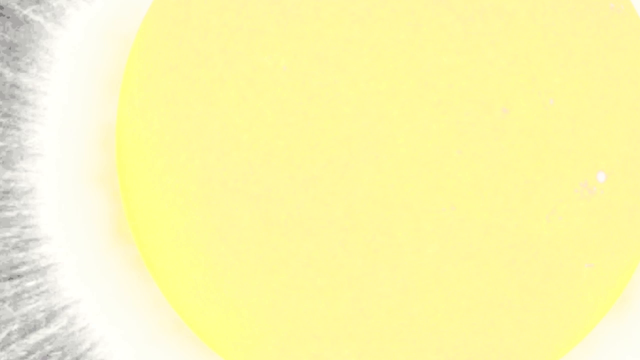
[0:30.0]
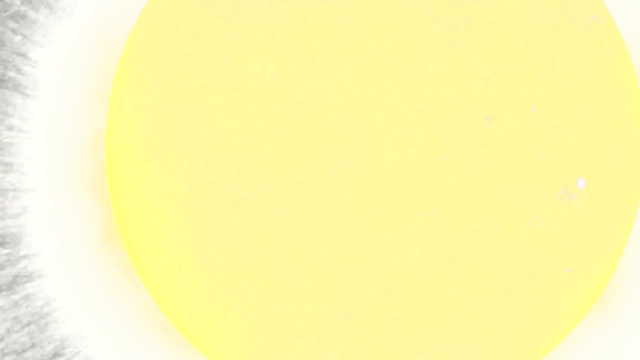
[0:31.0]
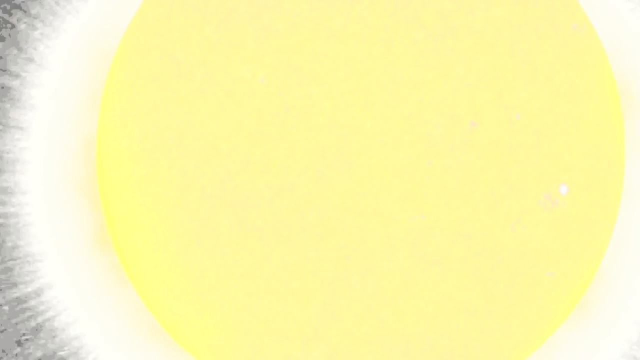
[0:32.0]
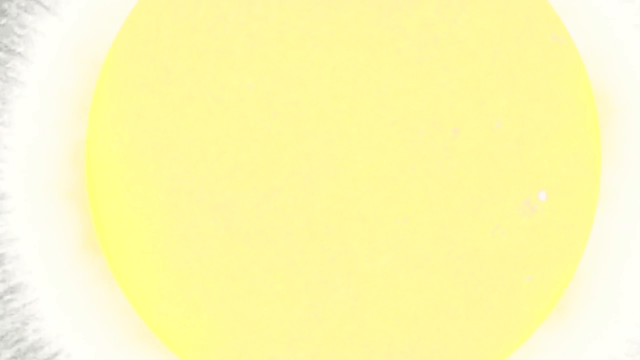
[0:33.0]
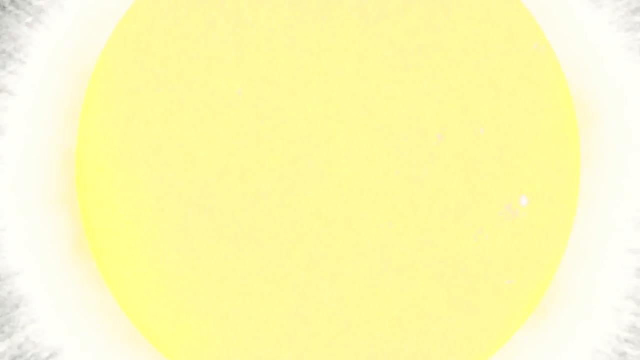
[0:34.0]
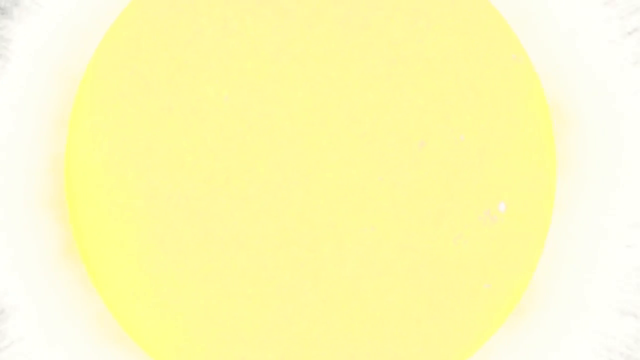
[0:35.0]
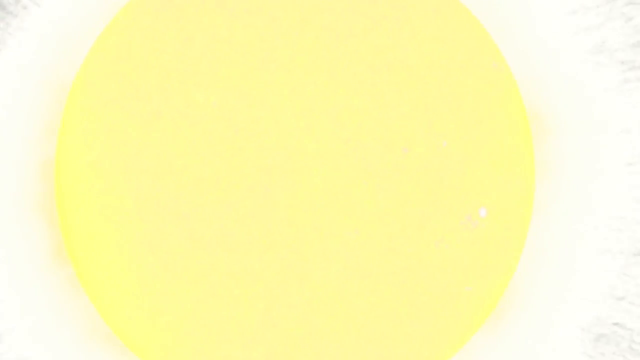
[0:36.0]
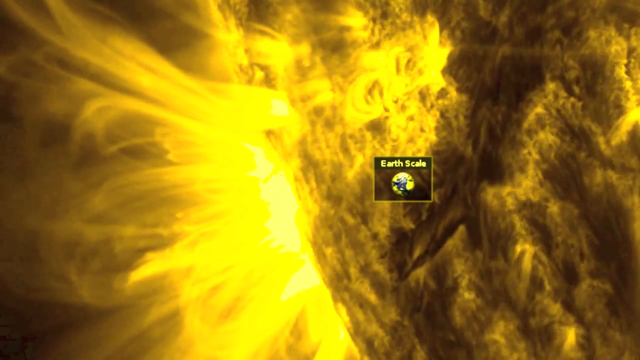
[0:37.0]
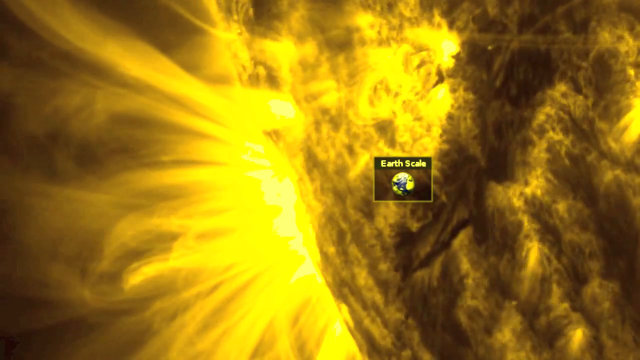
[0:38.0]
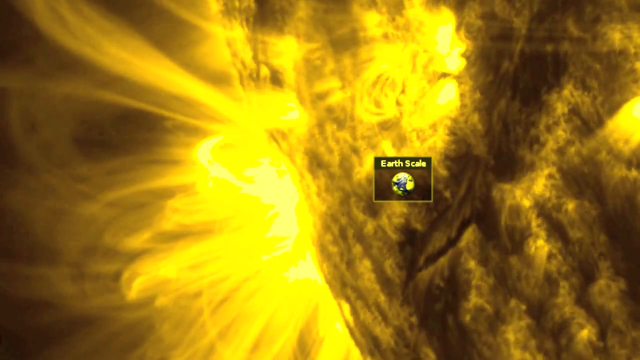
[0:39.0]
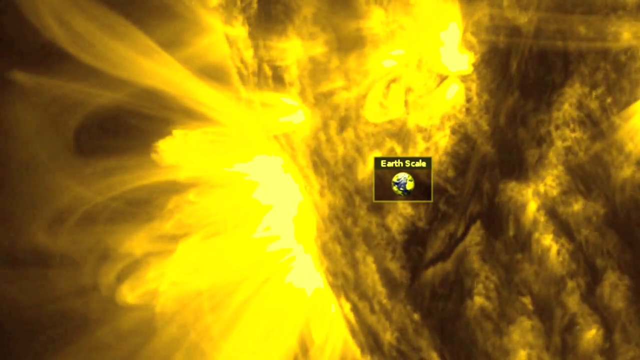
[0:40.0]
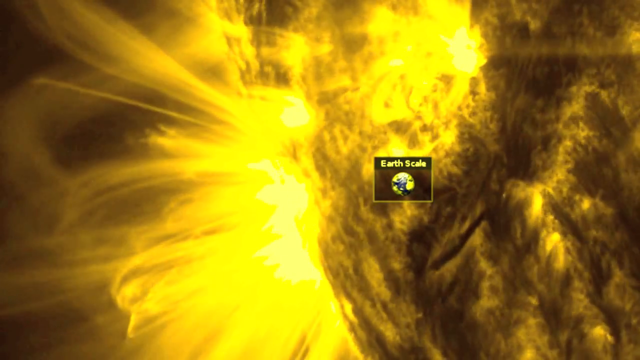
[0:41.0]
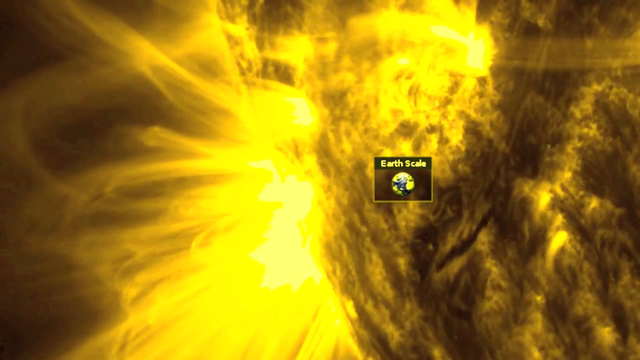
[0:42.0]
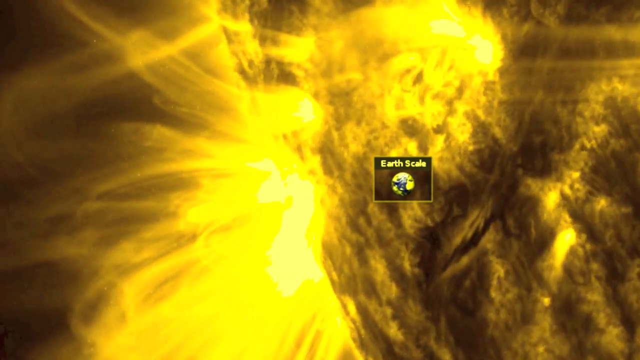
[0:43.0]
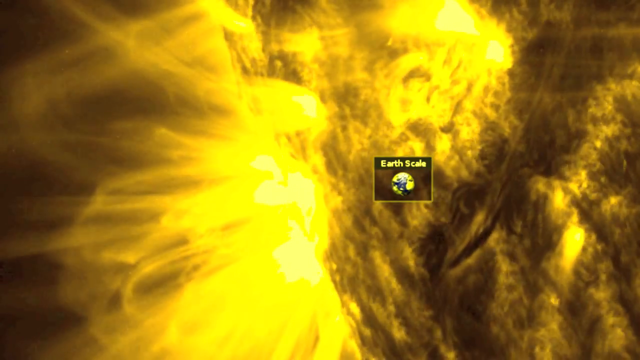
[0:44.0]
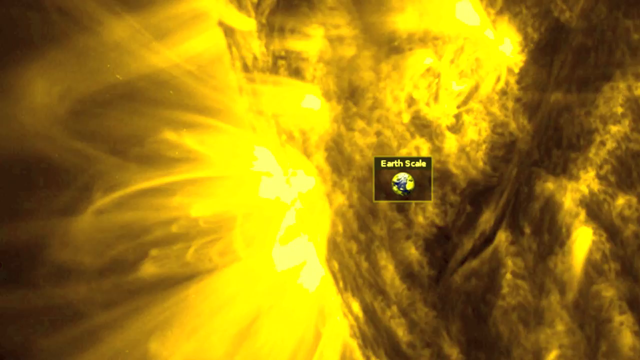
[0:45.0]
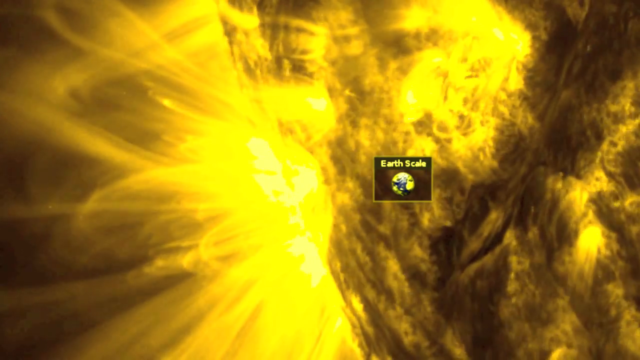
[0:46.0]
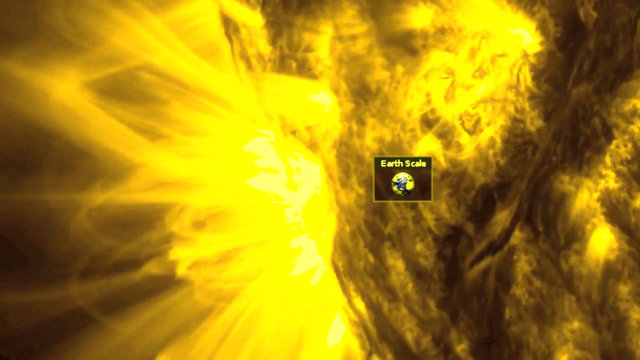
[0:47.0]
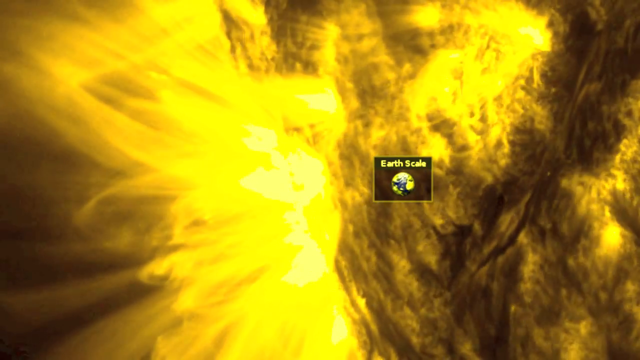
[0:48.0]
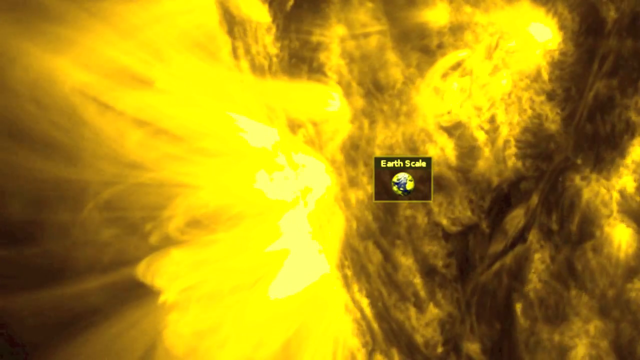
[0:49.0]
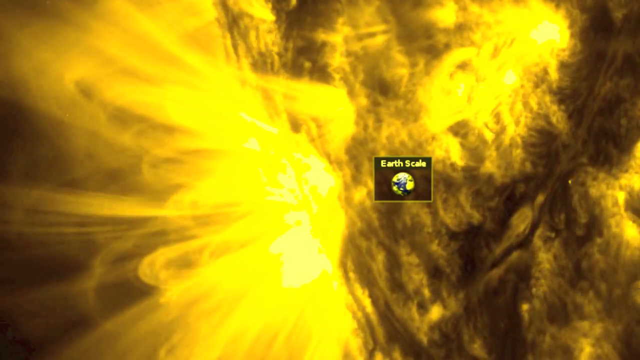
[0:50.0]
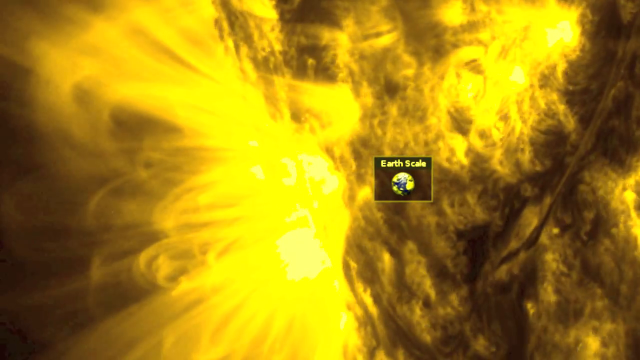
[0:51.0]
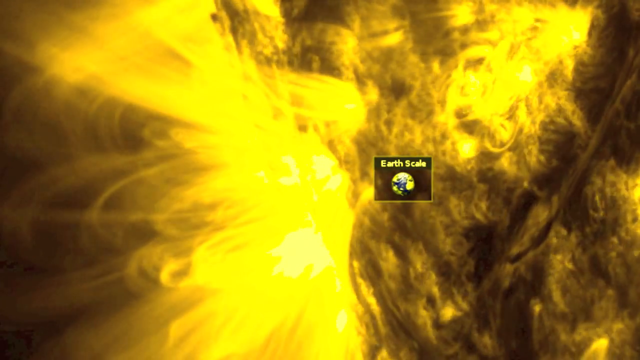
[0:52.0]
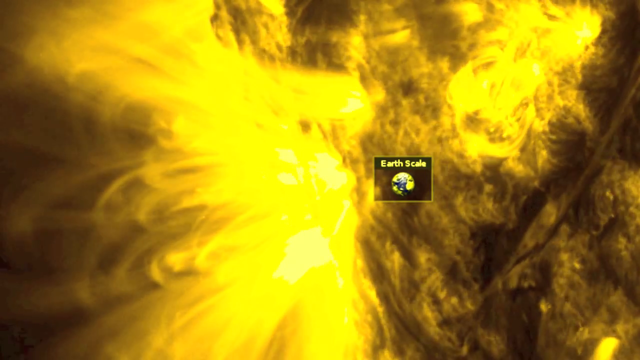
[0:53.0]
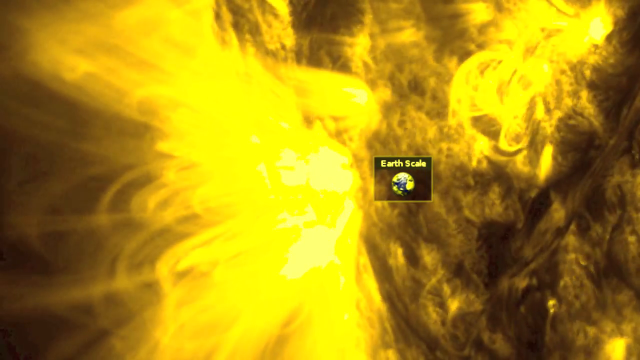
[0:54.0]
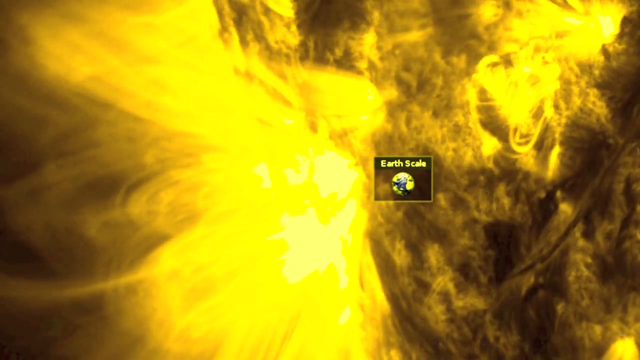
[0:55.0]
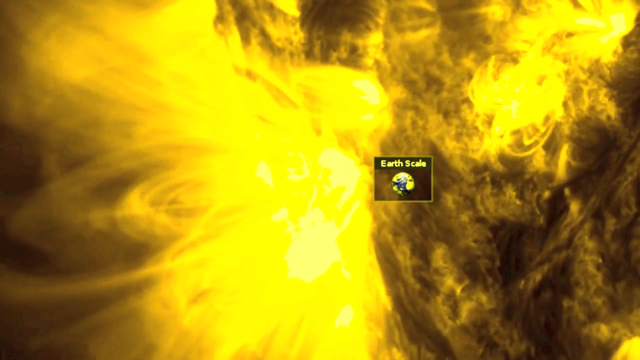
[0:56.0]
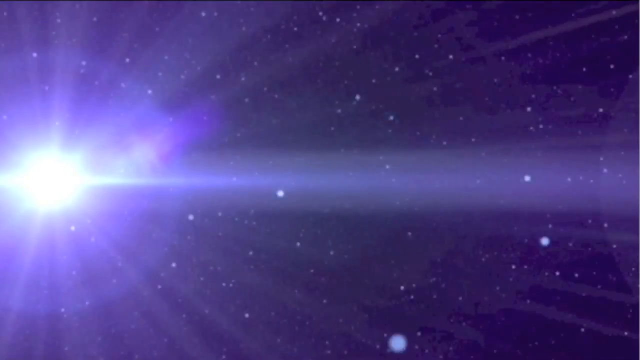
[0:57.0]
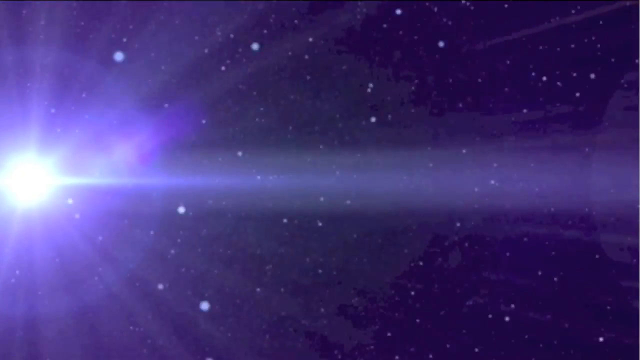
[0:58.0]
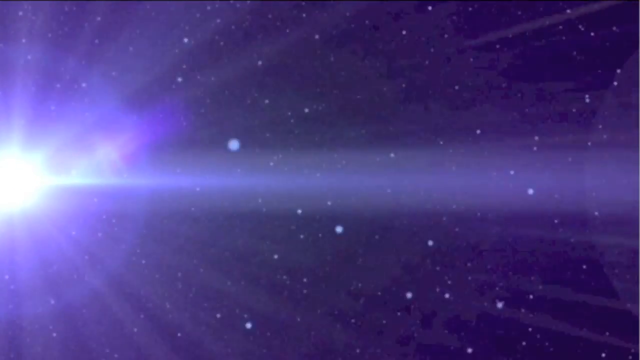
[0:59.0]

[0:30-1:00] A large yellow circle with white spots on it fills the screen, its top and bottom cut off. Multiple white lines come from its left side and seem almost to circle the yellow circle. The camera slowly pans to the right, revealing that white lines also come from the right side, sort of pulsating from the circle. The video then cuts to a 3D rendition of the sun's surface. In the very center is a rectangle with yellow text reading "Earth Scale," with the planet Earth shown inside the rectangle under the text. The sun's surface shows a cloudy black mass with multiple yellow beams coming off it and going into the distance until they fade into black. The sun appears to be slowly rotating from left to right.